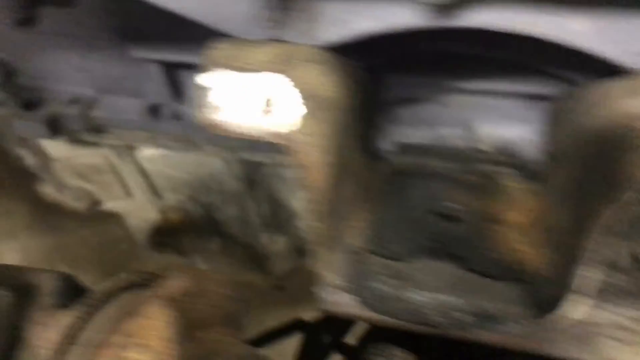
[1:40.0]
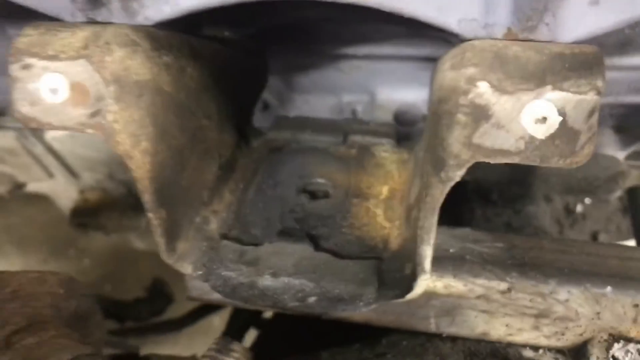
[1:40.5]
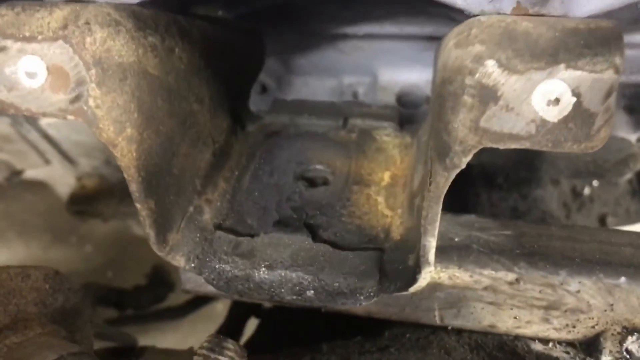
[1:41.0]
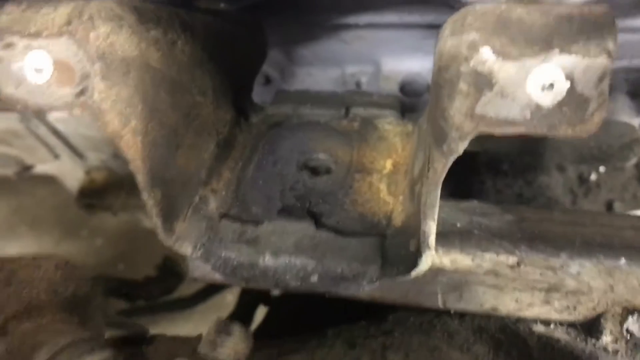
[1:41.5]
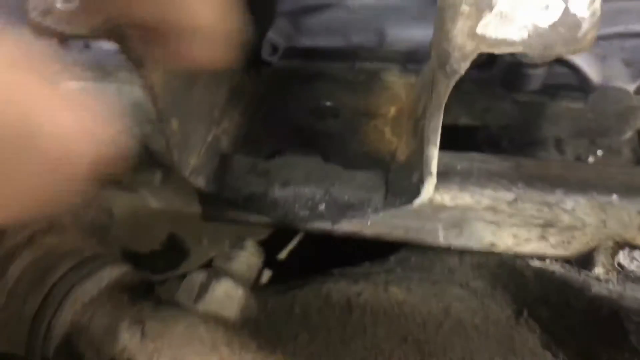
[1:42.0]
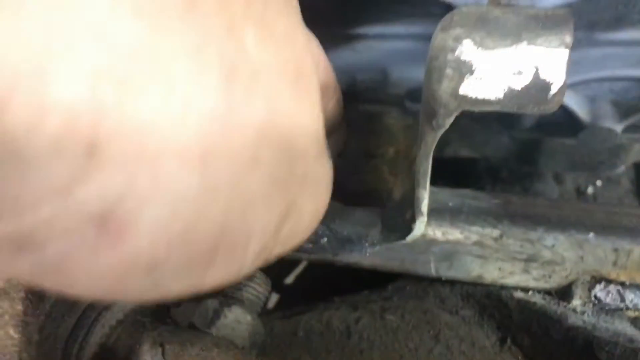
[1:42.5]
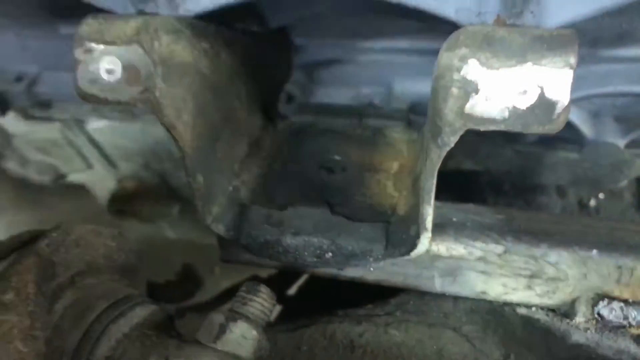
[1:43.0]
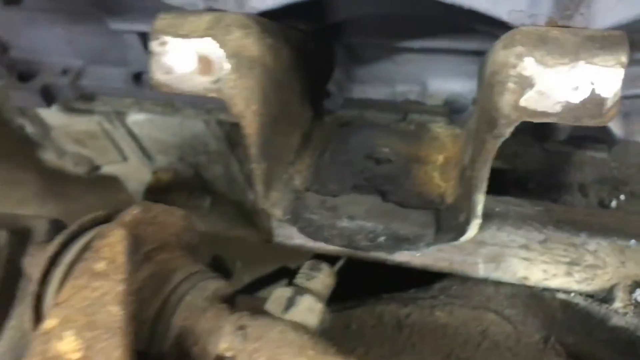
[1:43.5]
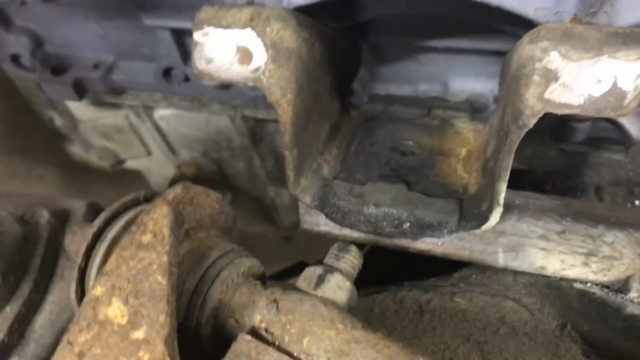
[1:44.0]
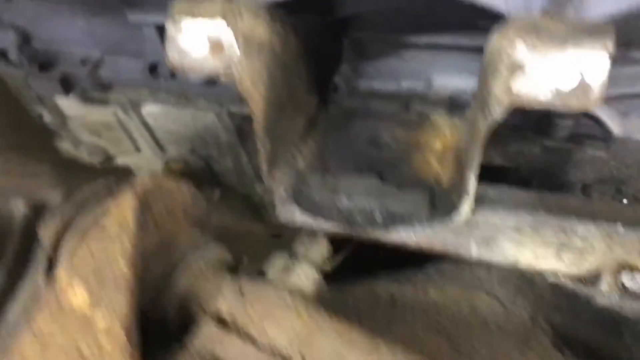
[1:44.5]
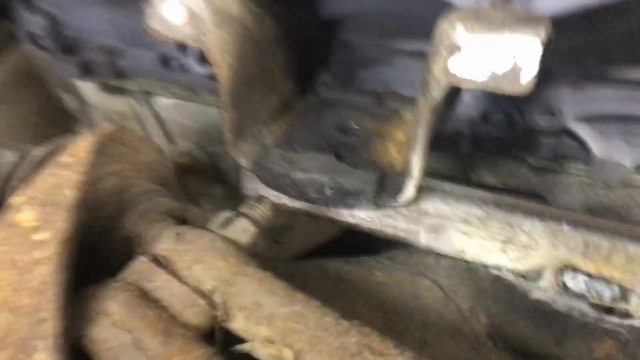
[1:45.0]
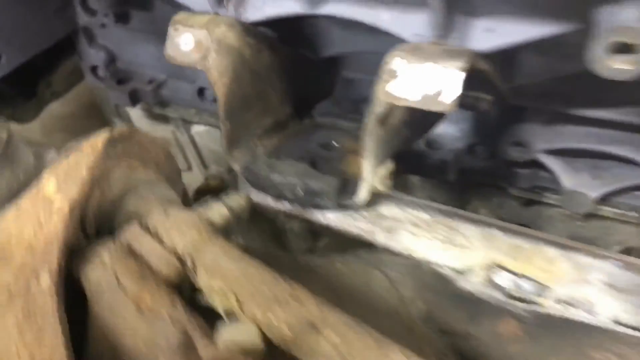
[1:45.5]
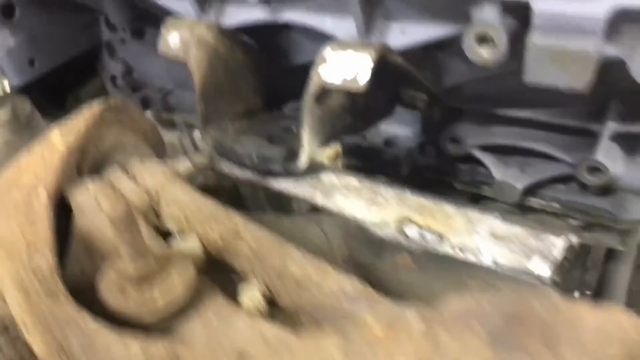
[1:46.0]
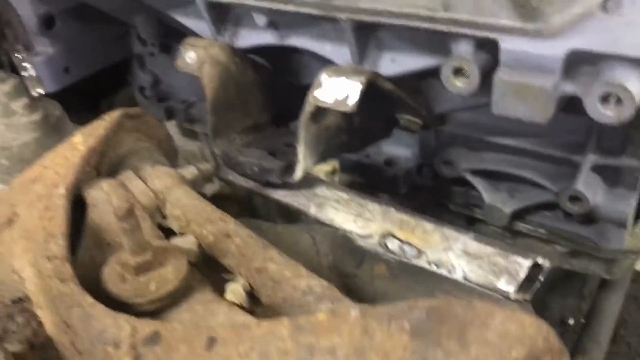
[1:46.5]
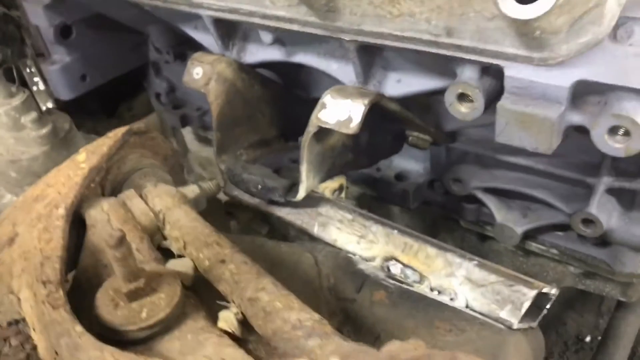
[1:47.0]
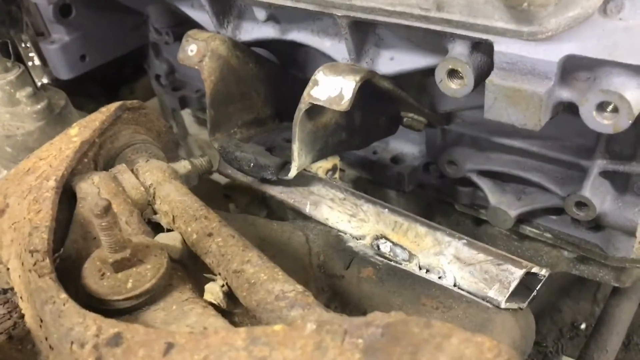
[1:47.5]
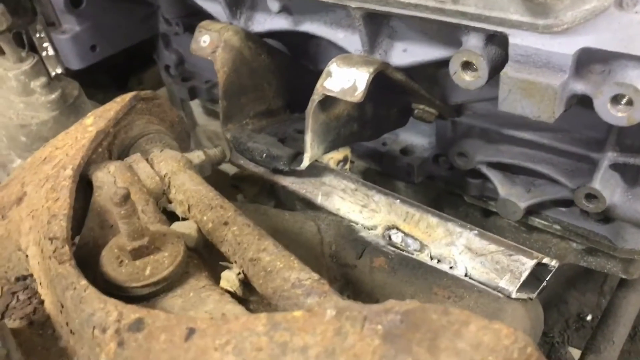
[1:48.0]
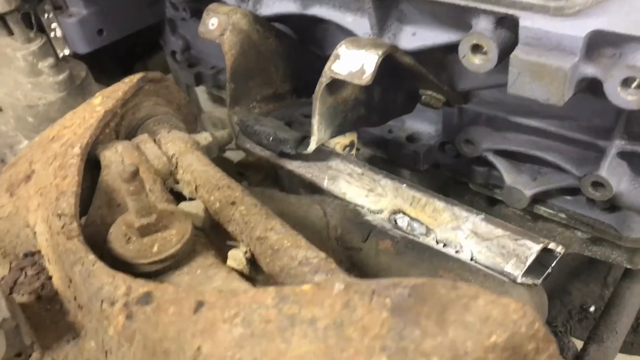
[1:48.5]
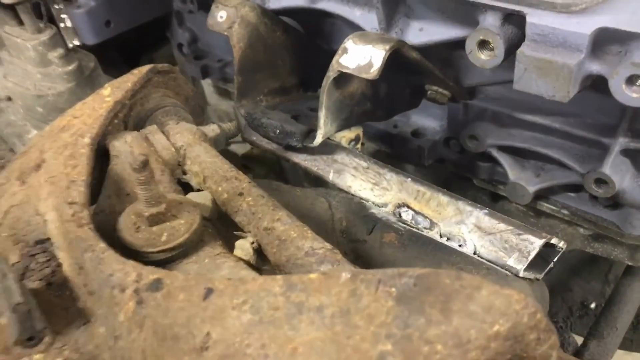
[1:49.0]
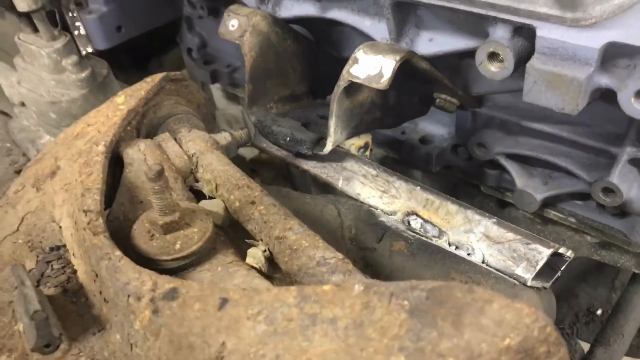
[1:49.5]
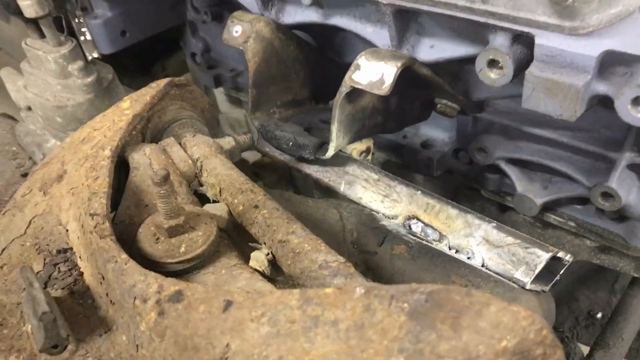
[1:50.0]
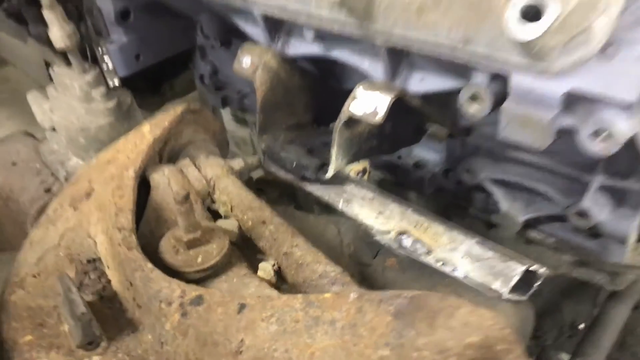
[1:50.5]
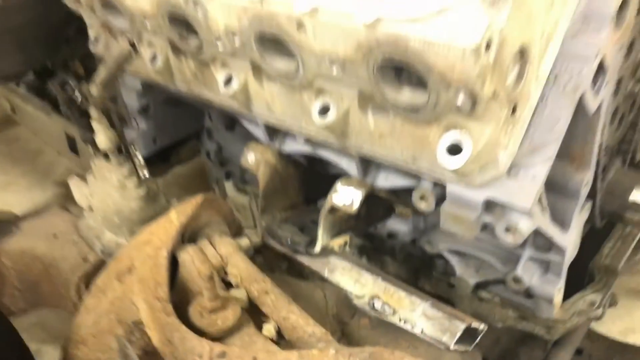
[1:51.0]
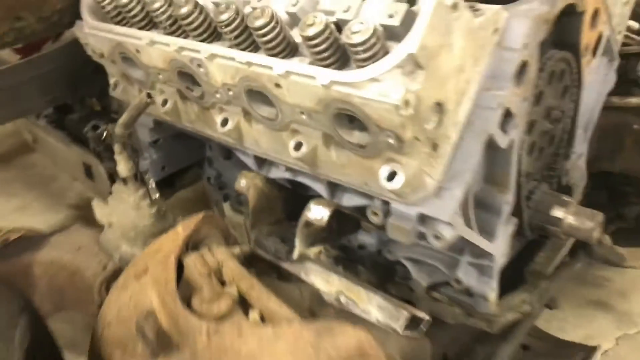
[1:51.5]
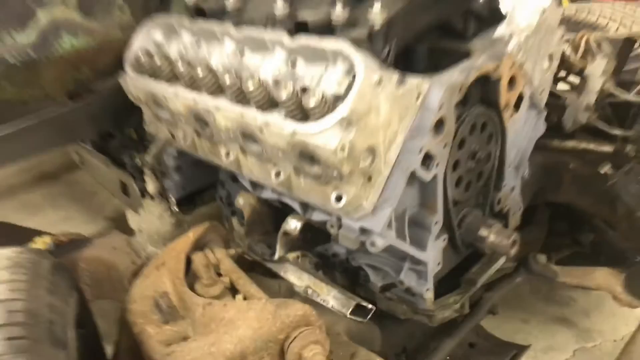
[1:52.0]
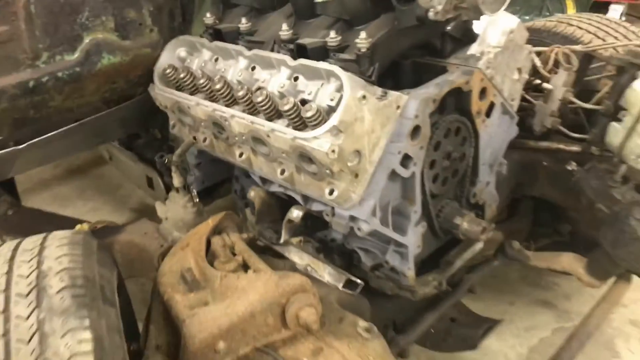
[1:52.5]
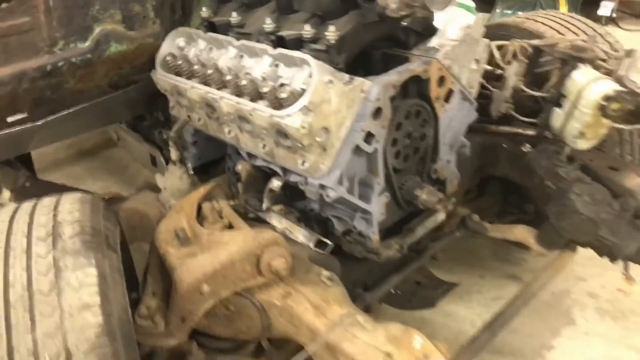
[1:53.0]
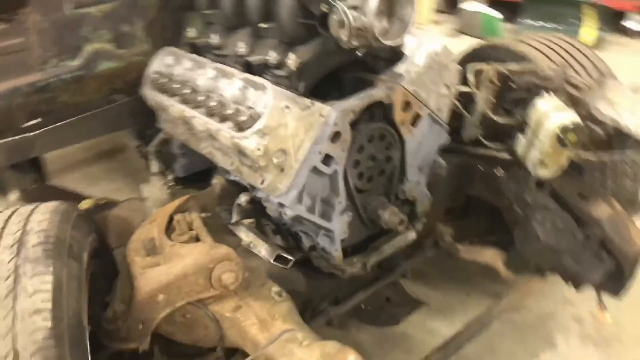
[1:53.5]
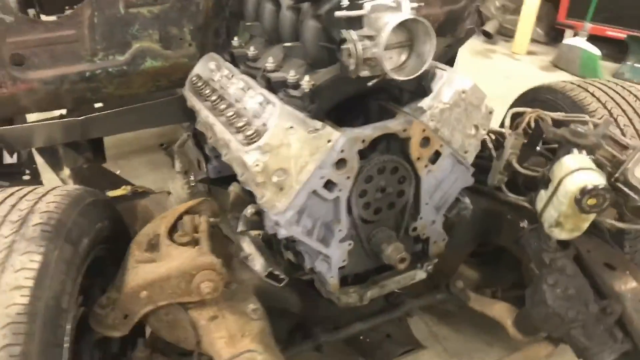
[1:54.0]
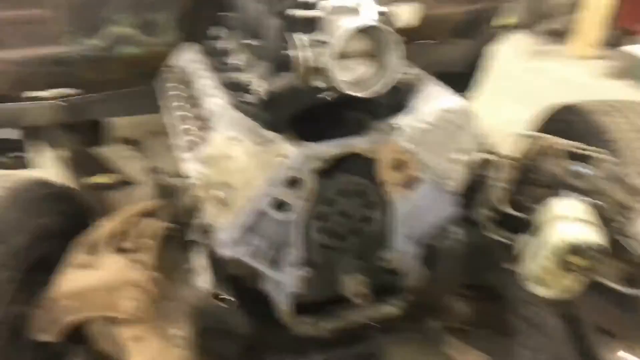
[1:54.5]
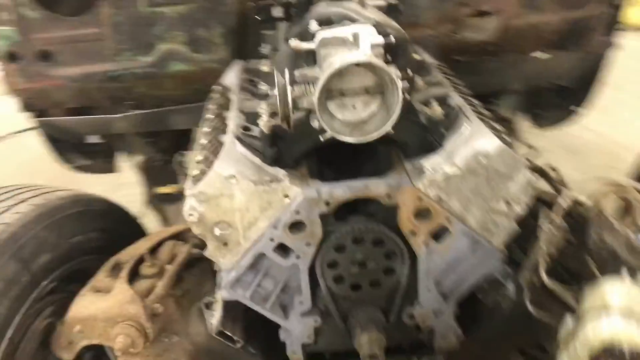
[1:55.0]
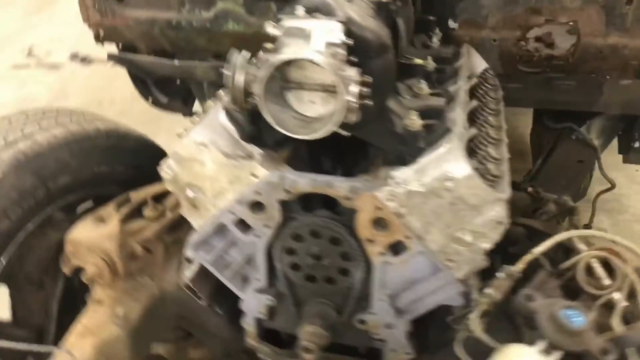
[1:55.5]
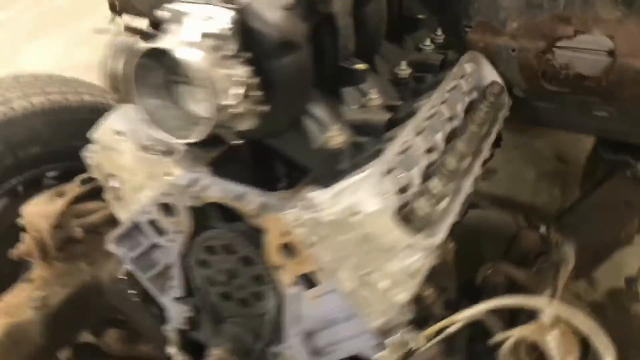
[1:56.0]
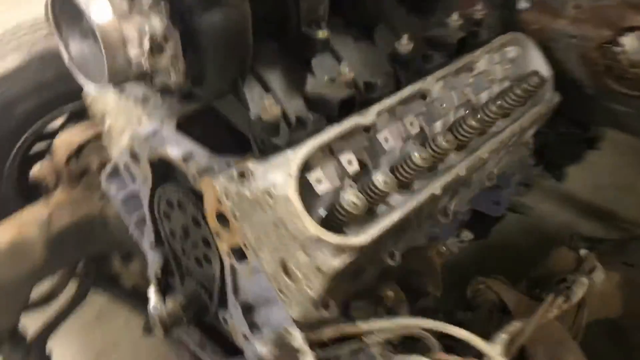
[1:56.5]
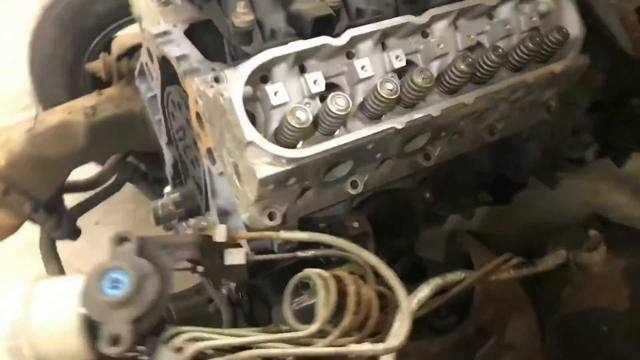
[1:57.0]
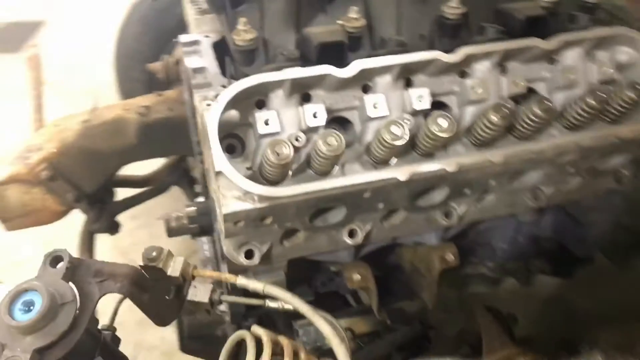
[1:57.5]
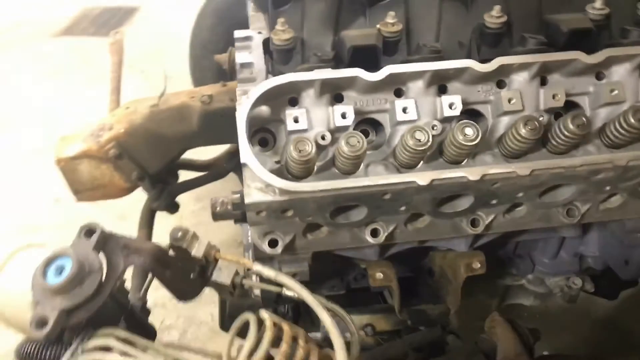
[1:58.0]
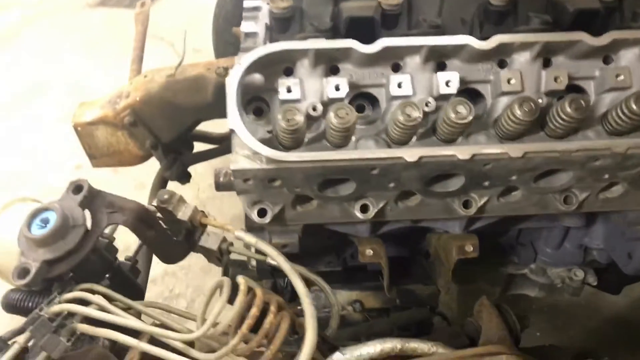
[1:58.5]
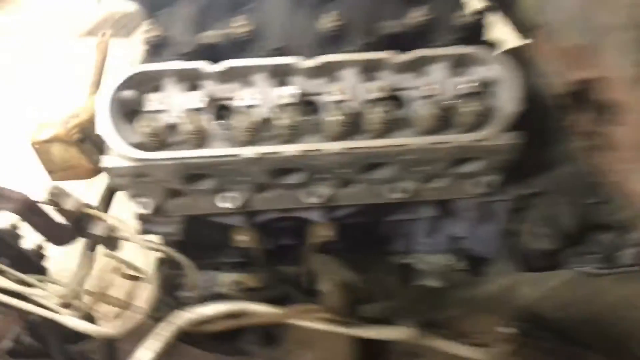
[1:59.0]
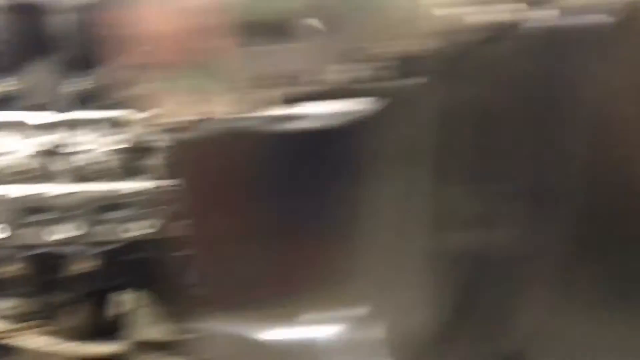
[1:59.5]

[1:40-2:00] The view begins very up close on some part near the engine. The hand of the person holding the camera comes out and points to a specific area under the engine. The camera then zooms out some, showing sort of a side view of that area. It zooms out even further as the person walks to the front and around to the other side, then walks back toward the bed area of the truck, or what is left of it. The end becomes very blurry as they walk kind of fast. Many of the parts on the truck look like holes have worn into them, and pieces look corroded and rusted out, most likely in need of replacement or fixing.